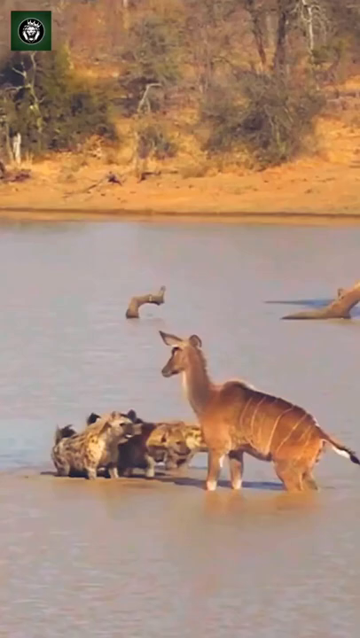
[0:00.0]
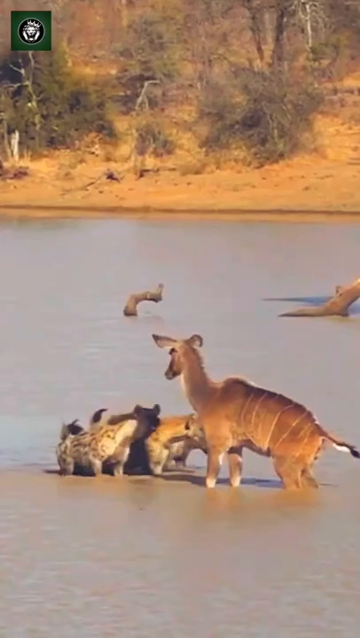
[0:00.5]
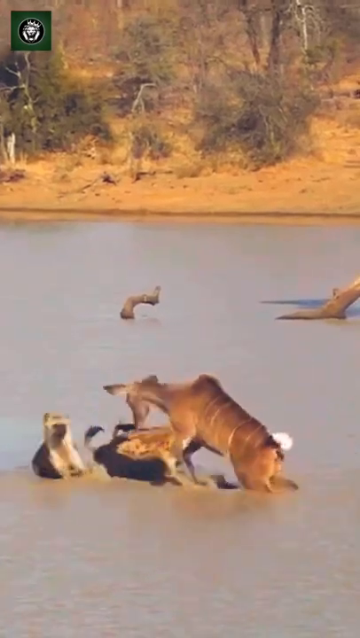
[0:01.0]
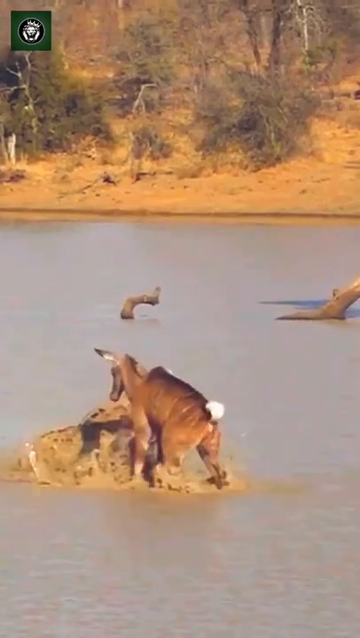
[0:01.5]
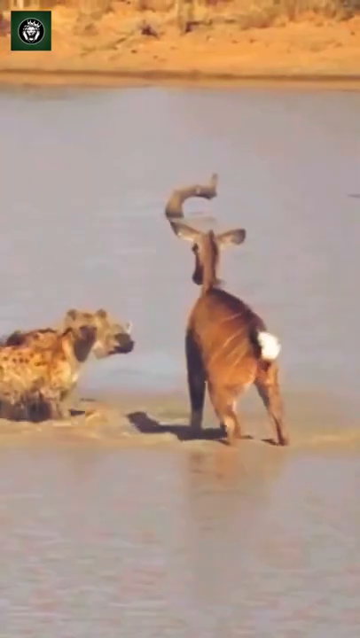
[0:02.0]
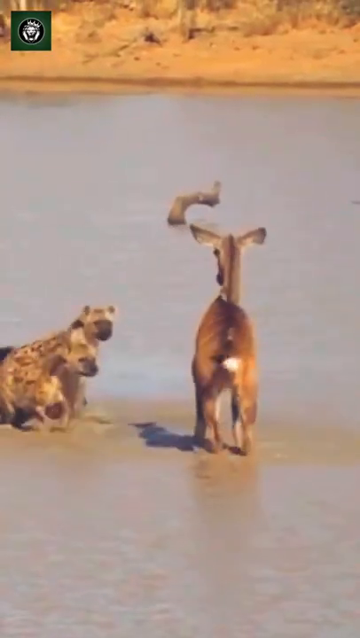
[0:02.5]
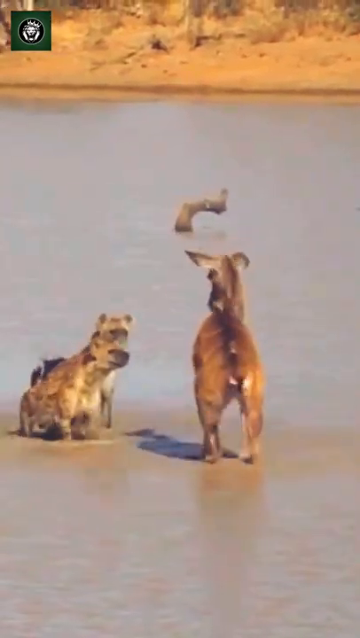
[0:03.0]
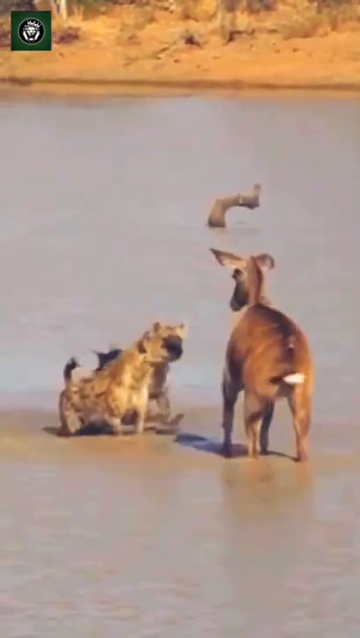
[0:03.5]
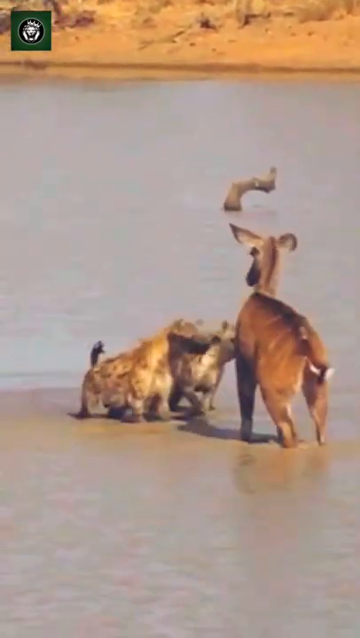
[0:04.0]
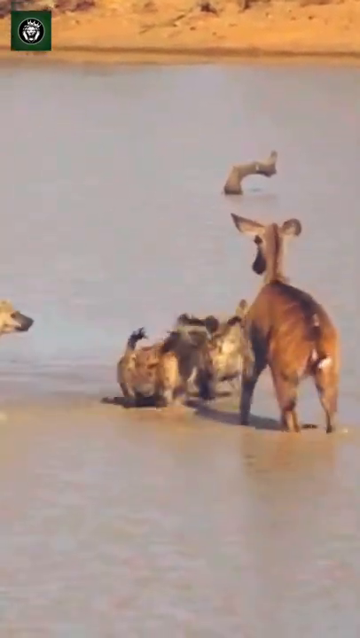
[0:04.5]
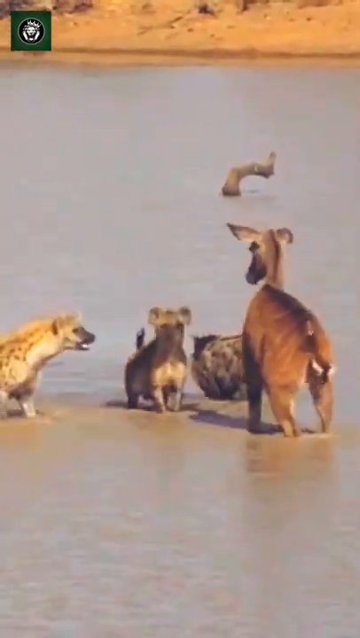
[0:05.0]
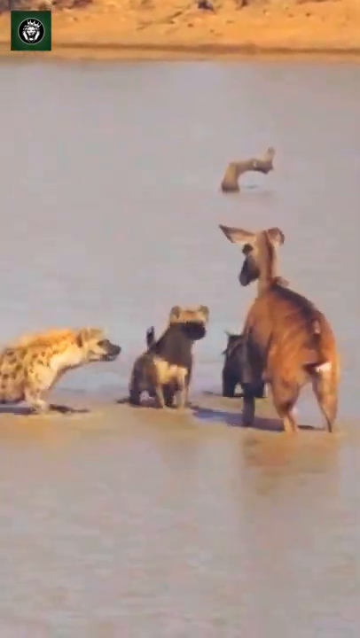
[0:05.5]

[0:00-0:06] A deer stands in a sandy riverbed, and in front of it are three spotted hyenas. They slowly walk up to the deer, wanting to bite it. In the background of the muddy bed there is a sandy bank with some green bushes and some dead trees. In the water behind the hyenas, a log sticks out in two separate places. The deer is light brown, with a white tail underneath and a dark brown stripe along its back. The hyenas look like cheetahs: they are light tan with black spots and white necks. They slowly push the deer backwards out of the bed. Then the deer takes its head and shoves downwards toward it in a defensive move.